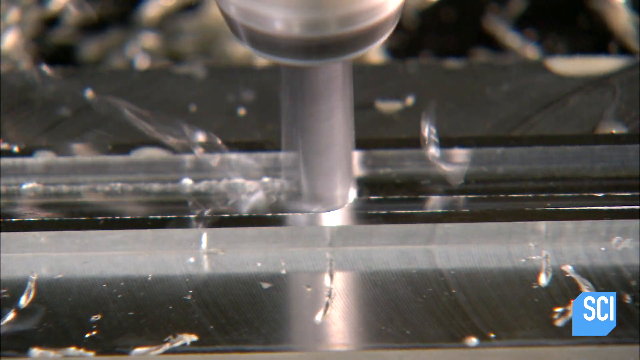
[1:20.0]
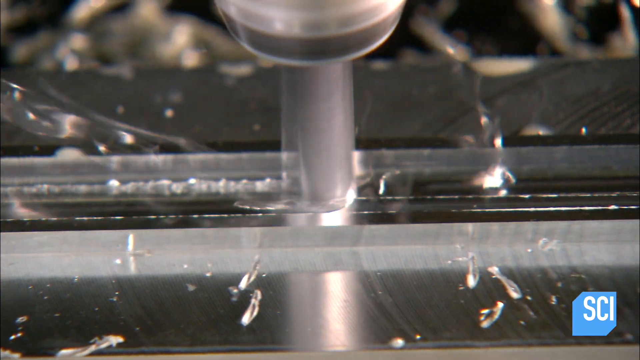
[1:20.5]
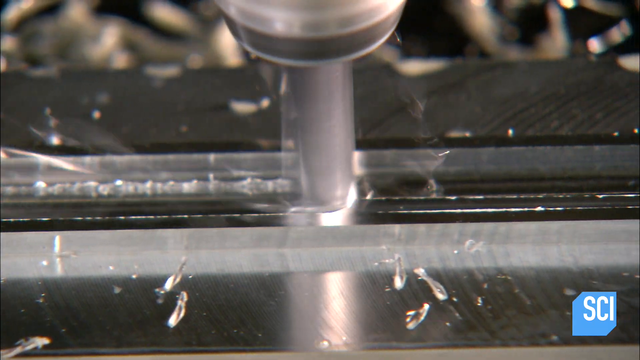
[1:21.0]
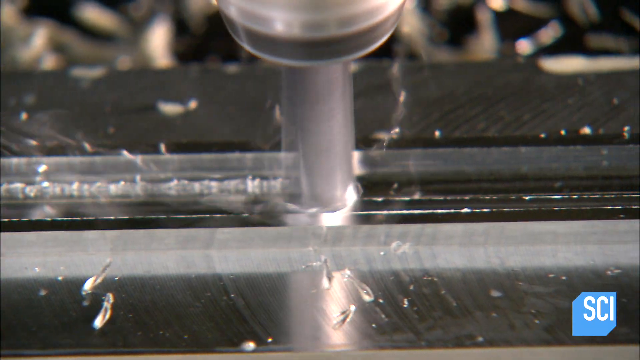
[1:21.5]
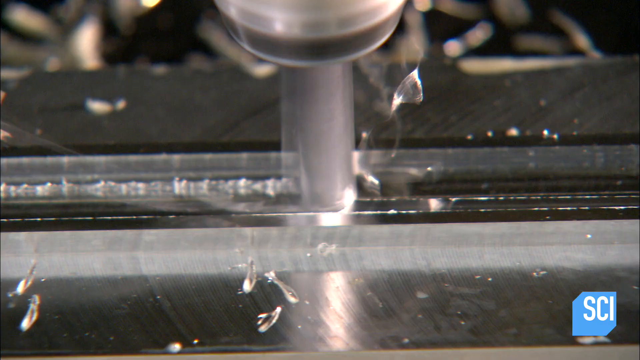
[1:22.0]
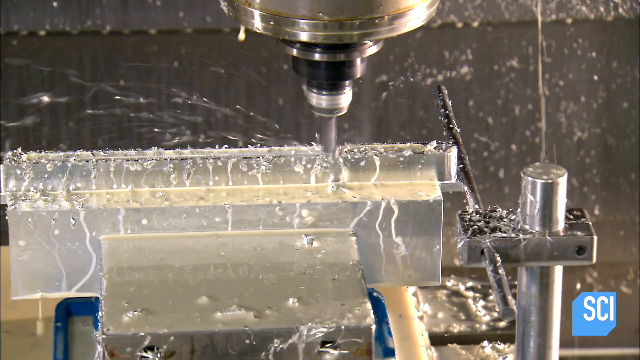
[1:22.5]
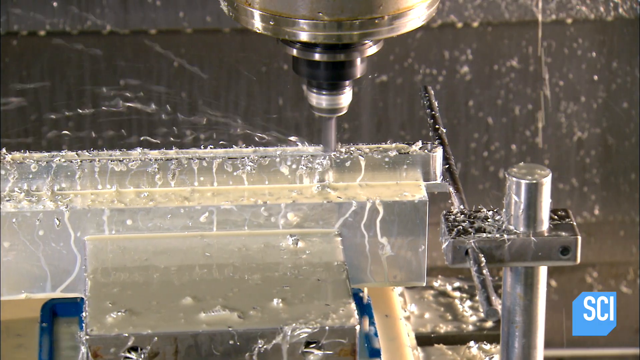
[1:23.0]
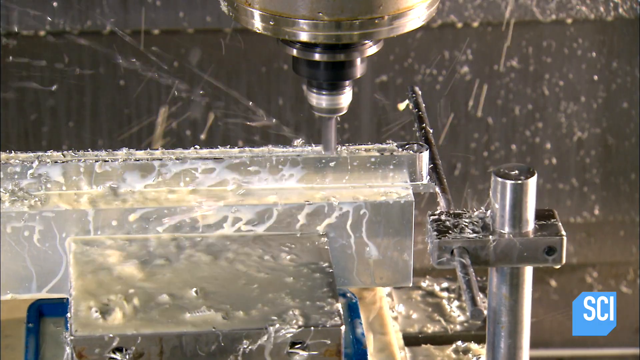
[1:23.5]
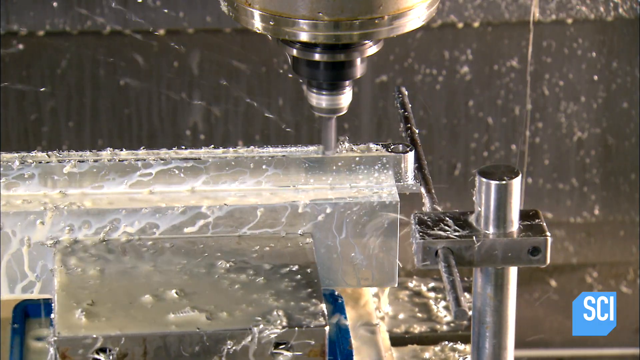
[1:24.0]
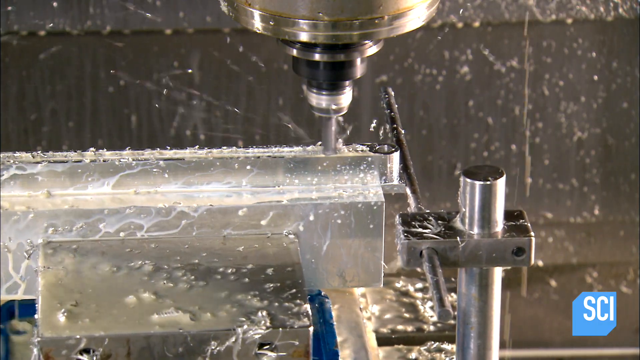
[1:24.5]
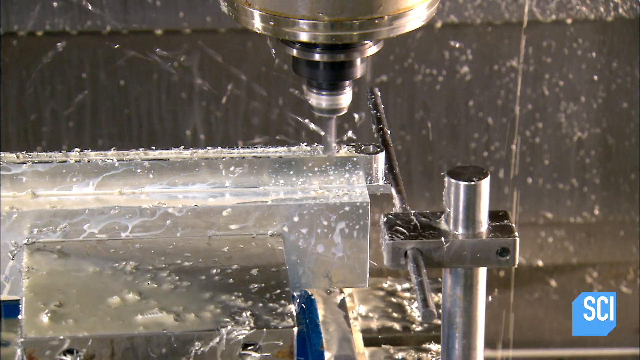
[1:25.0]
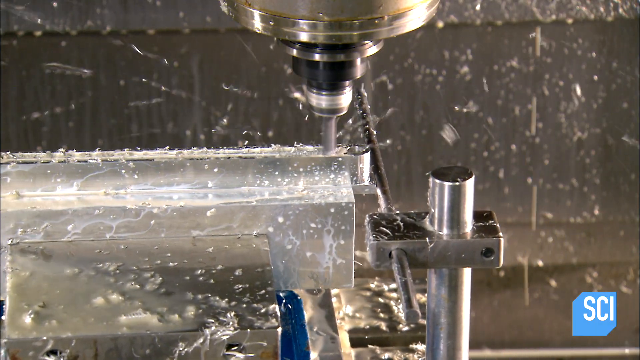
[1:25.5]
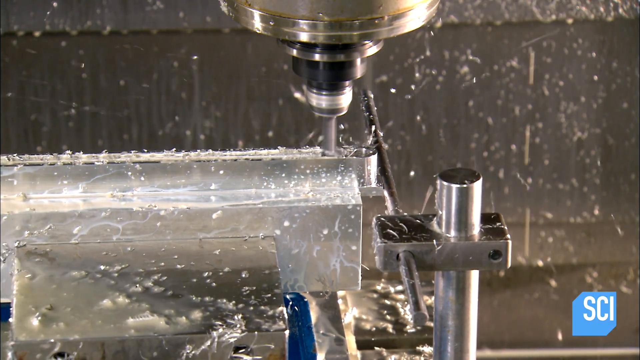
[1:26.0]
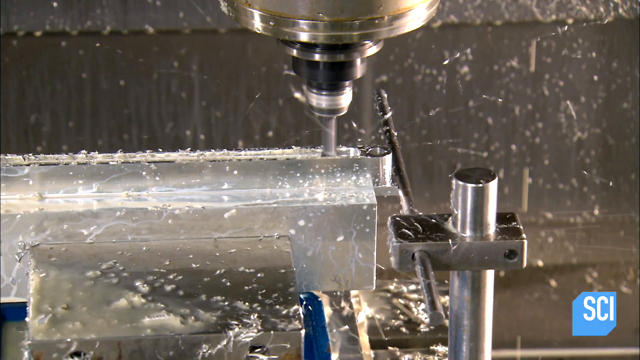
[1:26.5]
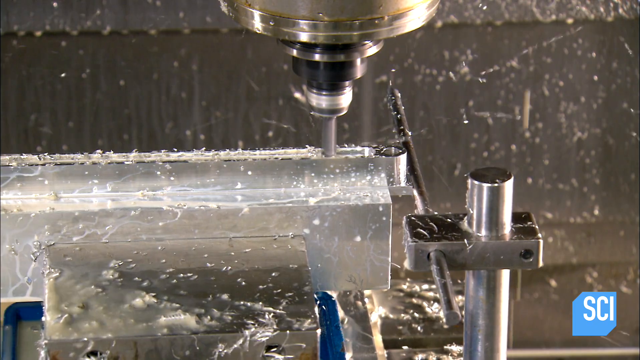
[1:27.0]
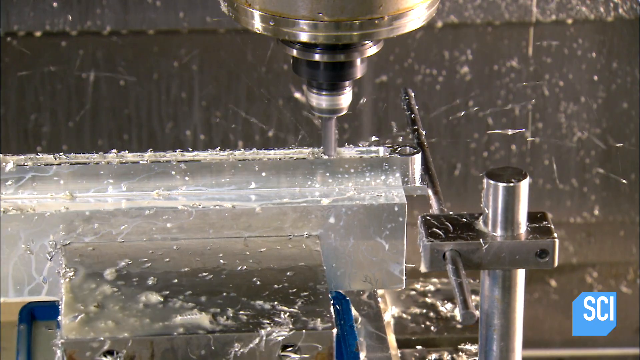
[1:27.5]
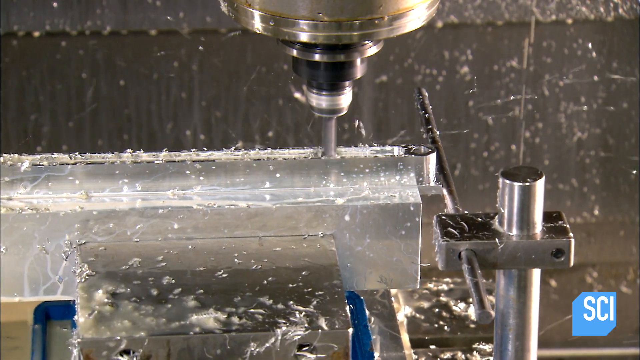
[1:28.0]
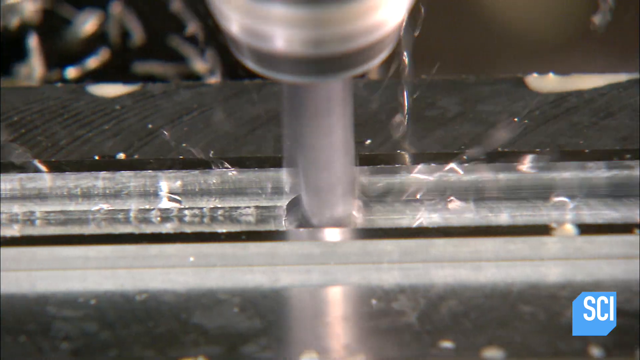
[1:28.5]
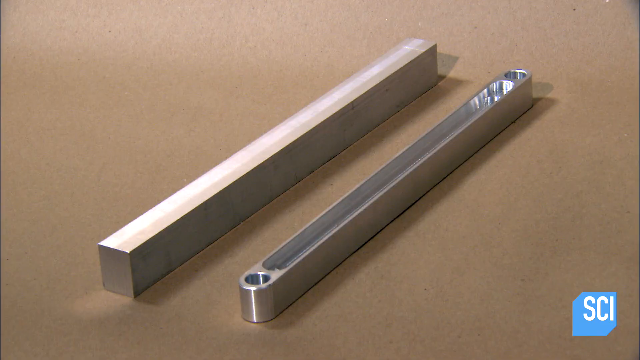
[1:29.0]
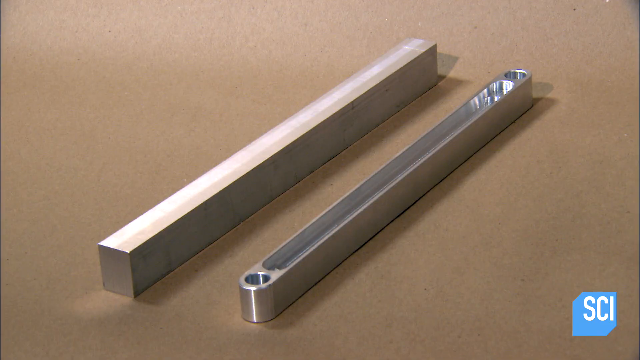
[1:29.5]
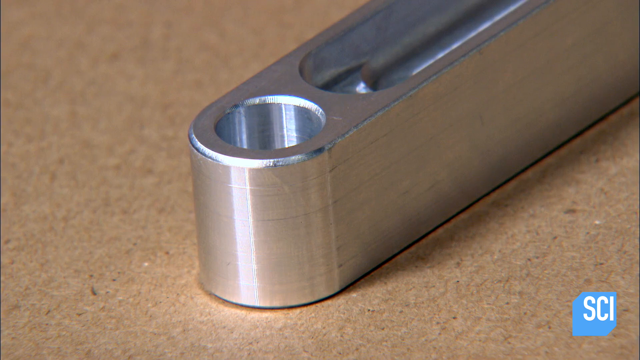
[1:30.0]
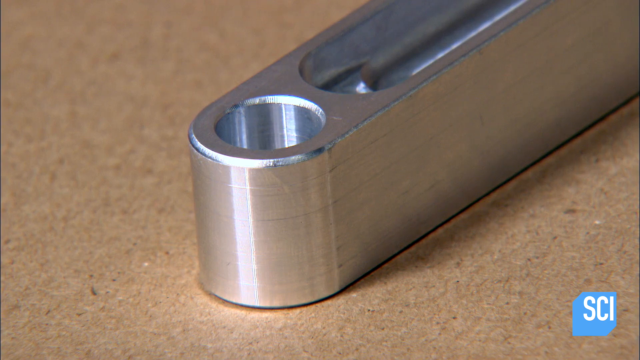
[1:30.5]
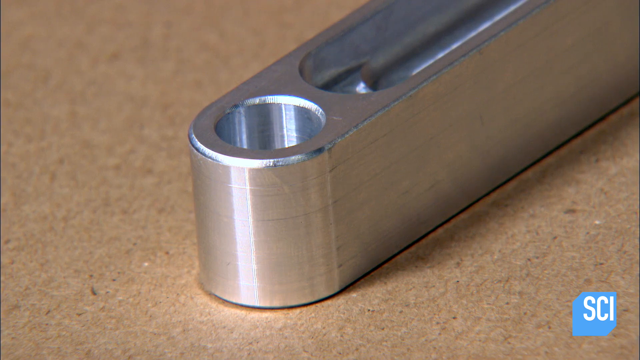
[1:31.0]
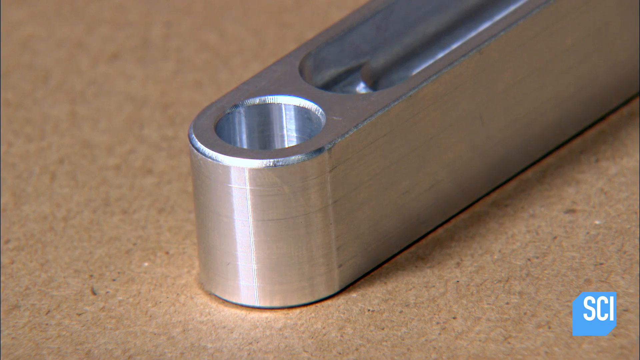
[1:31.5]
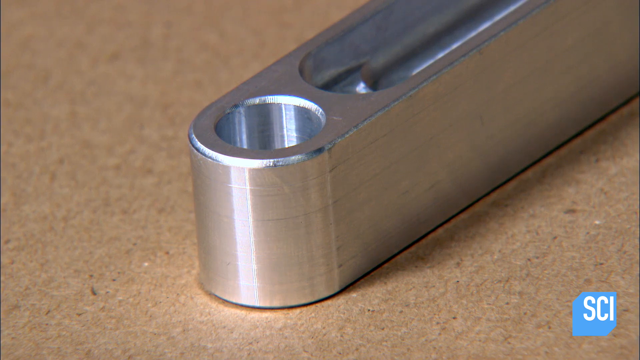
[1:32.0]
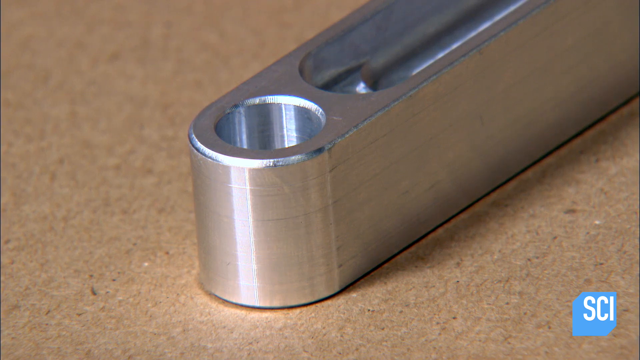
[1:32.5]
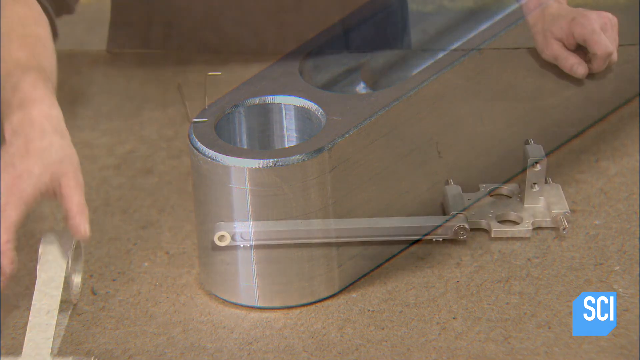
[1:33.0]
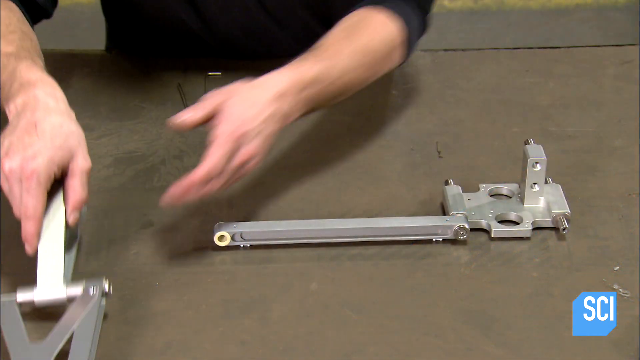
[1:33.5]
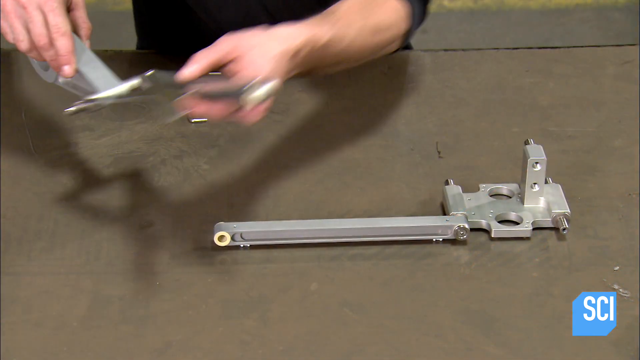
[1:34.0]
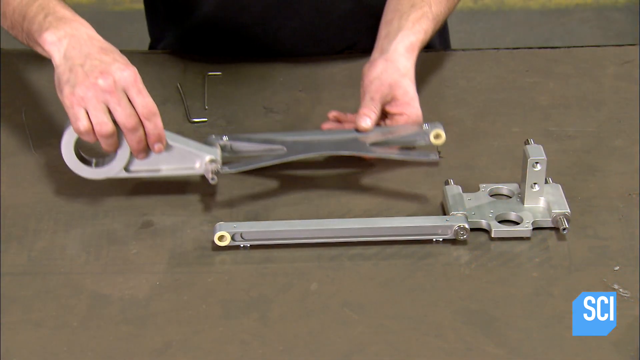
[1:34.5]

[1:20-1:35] A machine with a cutting bit cuts a groove into a piece of metal, moving from the left side of the screen to the right and then turning back toward the left. Metal shavings fly out from the cutting bit. The piece of metal being cut is silver and very shiny. What is apparently the cut piece of metal is then shown lying on a brown table, with a hole in the end. A man grabs another metal piece and lays it next to it, looking like he might be about to assemble the two pieces into one.